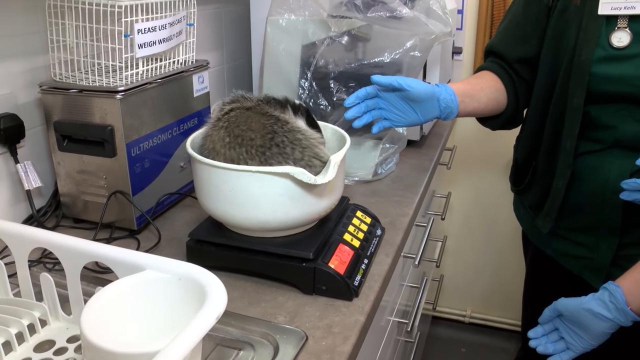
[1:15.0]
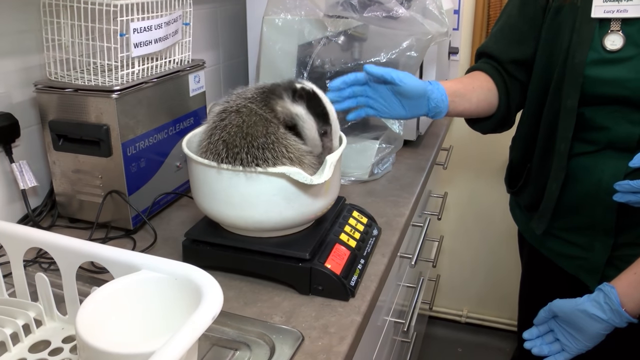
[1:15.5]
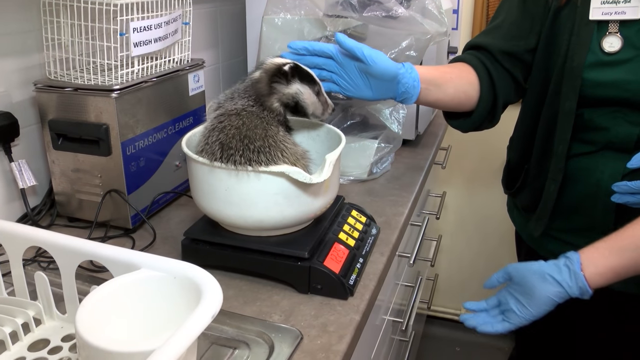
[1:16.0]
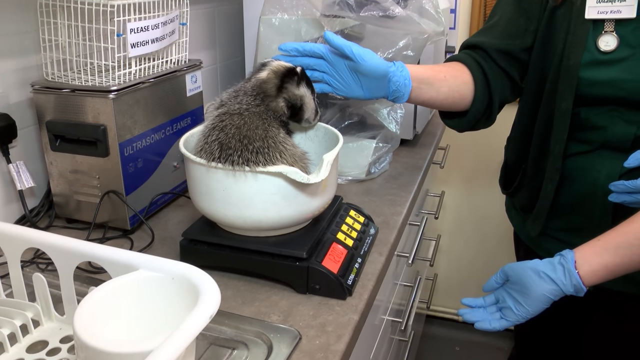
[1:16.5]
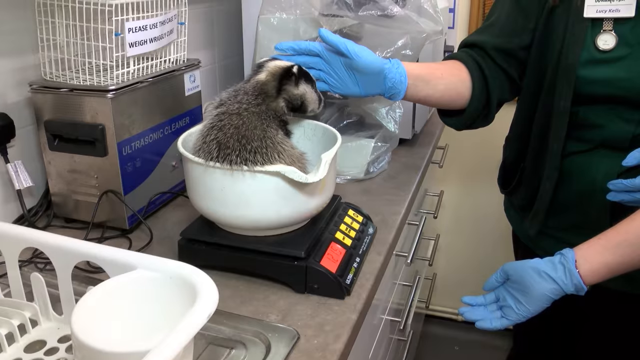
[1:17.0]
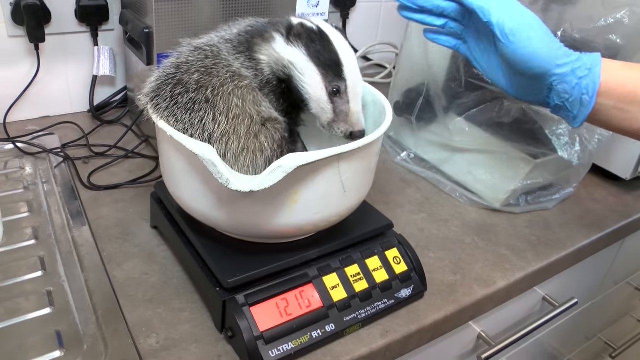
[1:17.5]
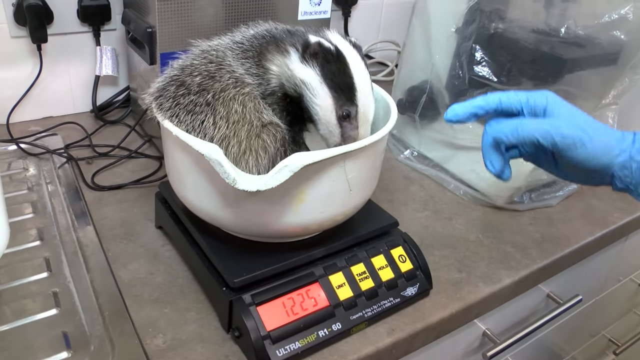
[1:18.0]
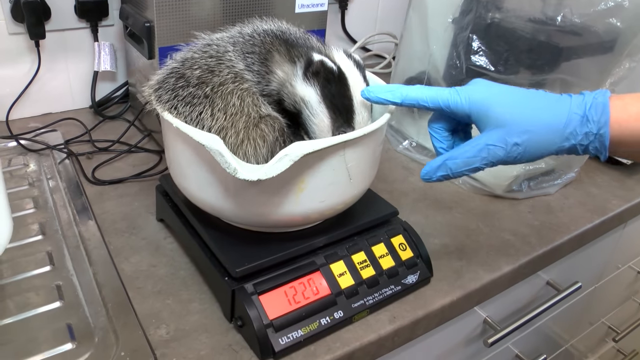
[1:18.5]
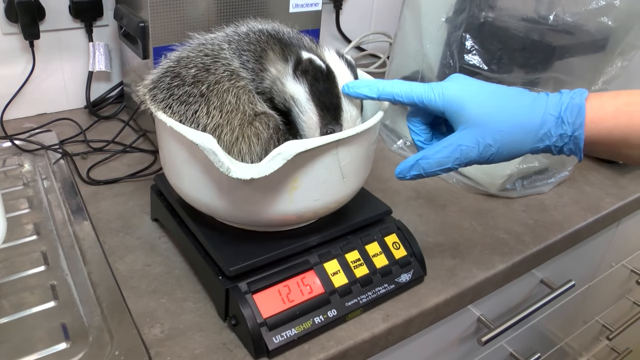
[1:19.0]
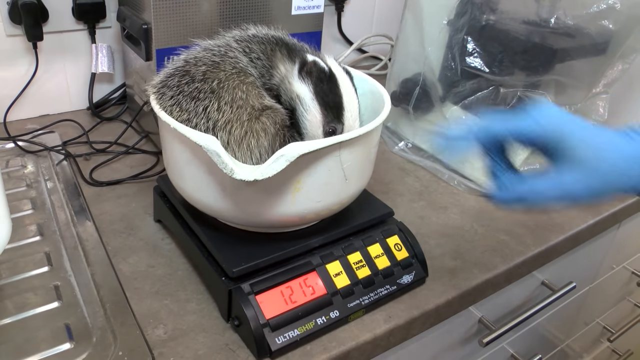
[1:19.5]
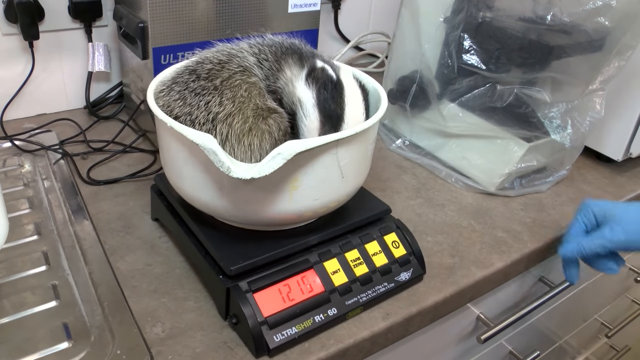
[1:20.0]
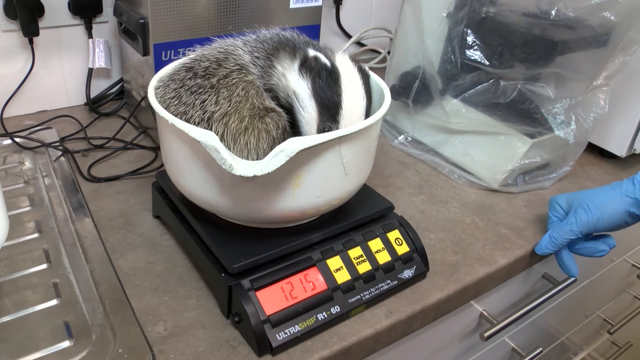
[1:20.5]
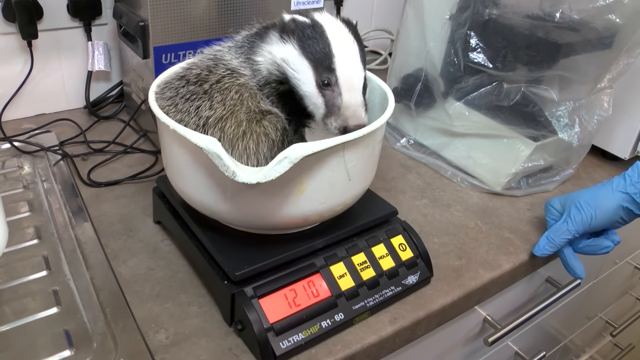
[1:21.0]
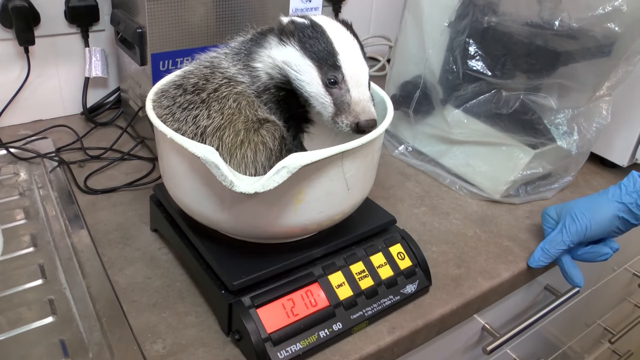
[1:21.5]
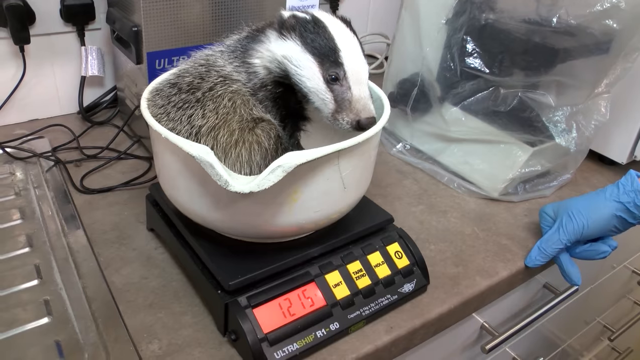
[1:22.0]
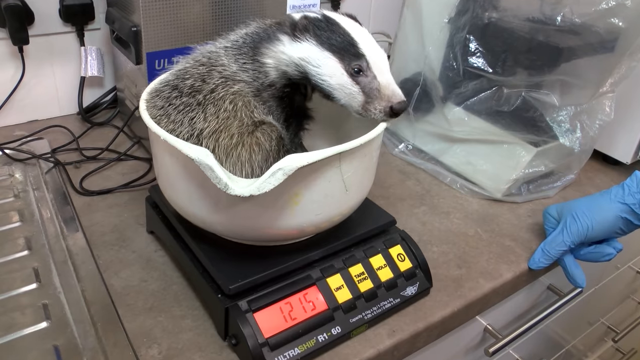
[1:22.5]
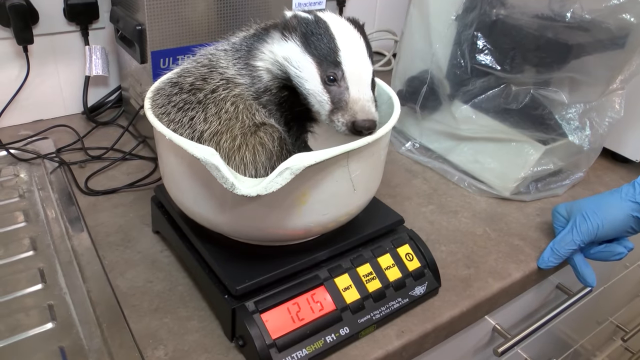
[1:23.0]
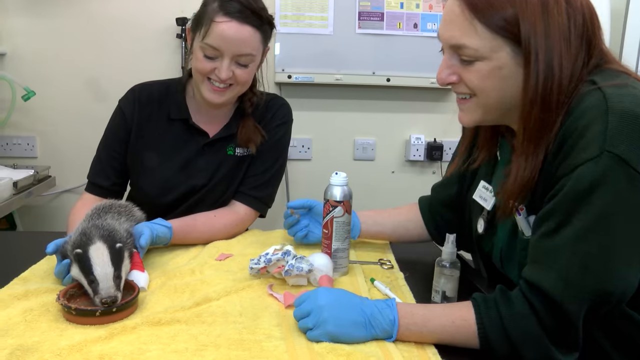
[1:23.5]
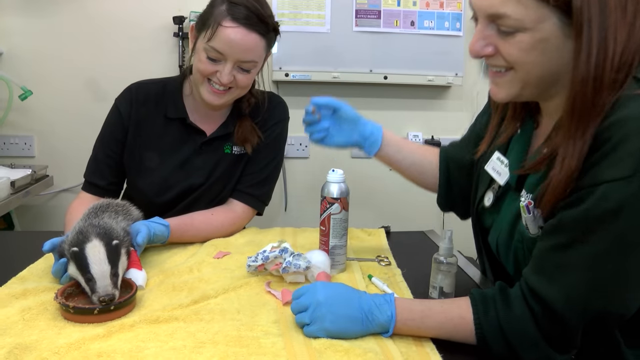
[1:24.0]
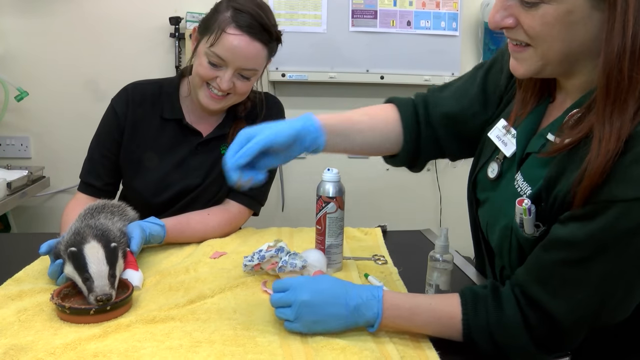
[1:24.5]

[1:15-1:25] The badger is in a bowl on a small black scale with red and yellow buttons on the countertop. The number comes up as 121.5, and the women seem happy with it. The badger turns around in the little basket. He has bright eyes and gray fur; from the neck to the nose he is white, with two black stripes, one over each eye, running from the neck to the front of the face. He seems to be thriving and getting into things. In the next scene they are back at the table on the yellow towel, and it looks like he is eating something out of a little tray.